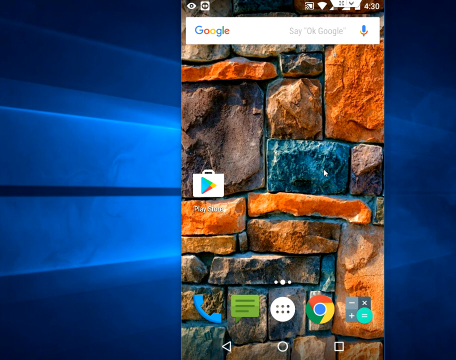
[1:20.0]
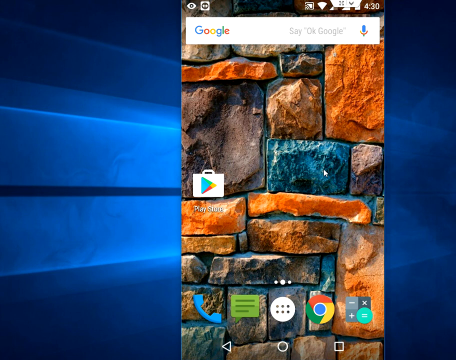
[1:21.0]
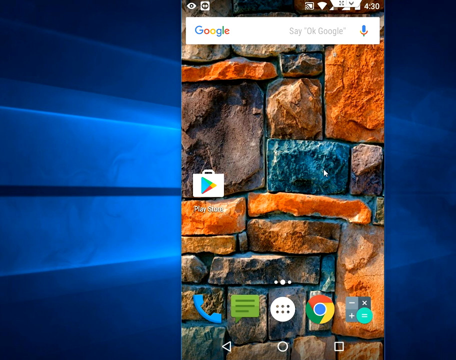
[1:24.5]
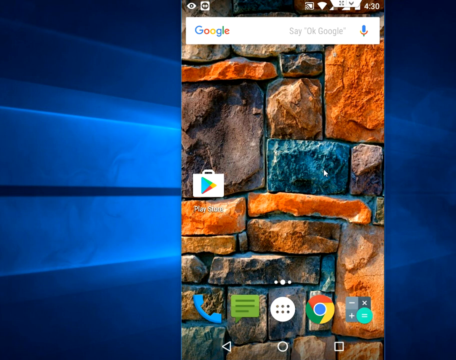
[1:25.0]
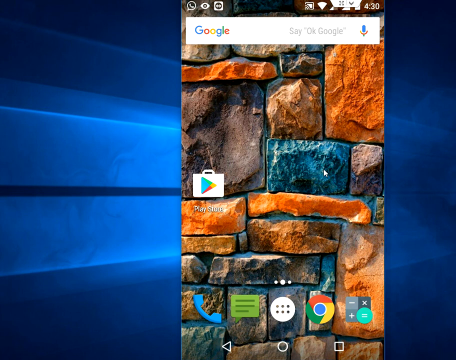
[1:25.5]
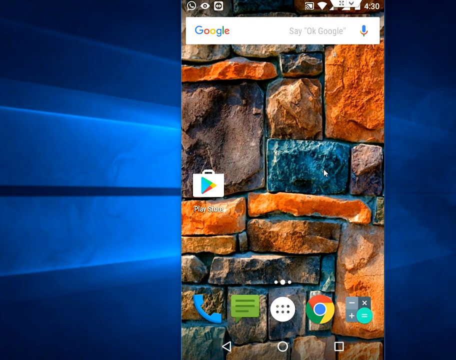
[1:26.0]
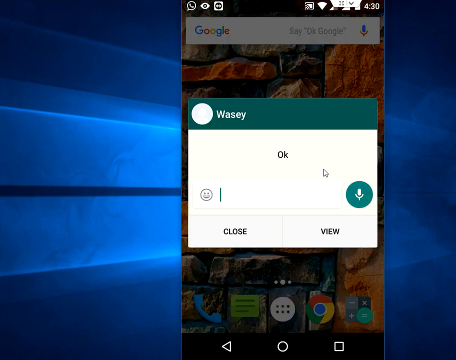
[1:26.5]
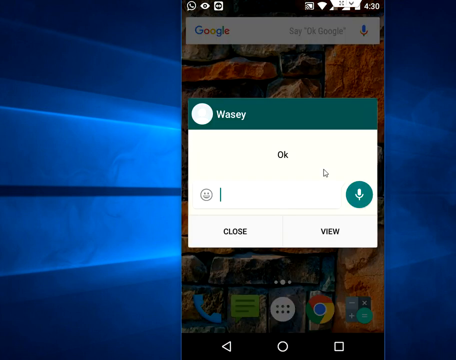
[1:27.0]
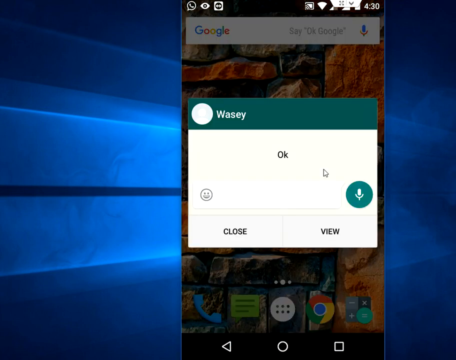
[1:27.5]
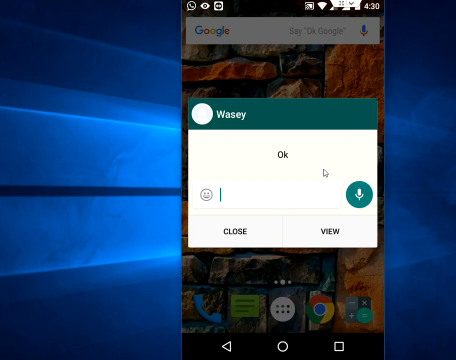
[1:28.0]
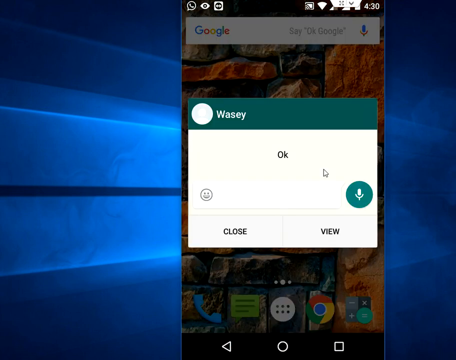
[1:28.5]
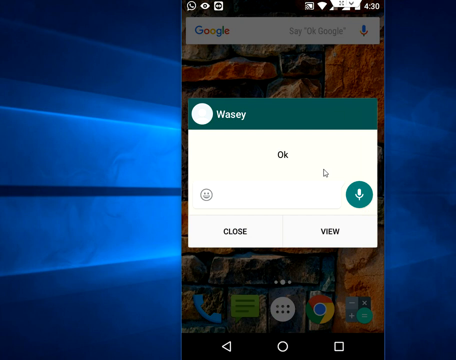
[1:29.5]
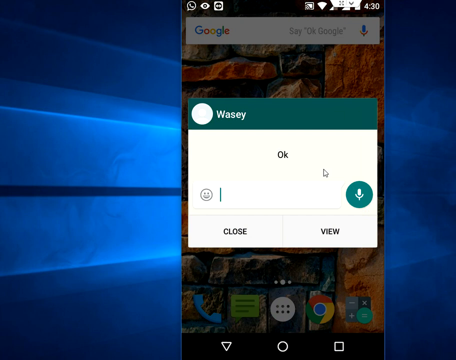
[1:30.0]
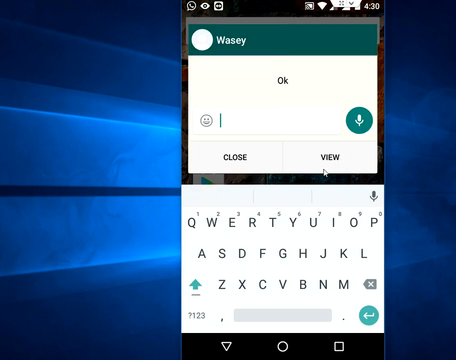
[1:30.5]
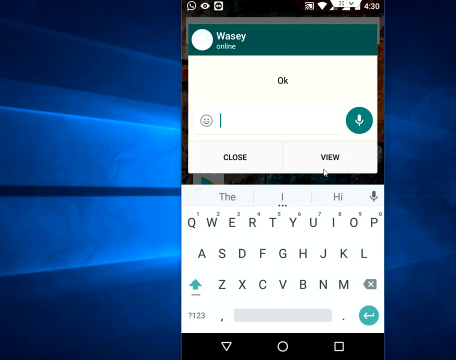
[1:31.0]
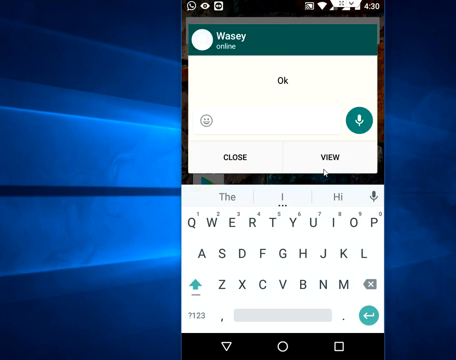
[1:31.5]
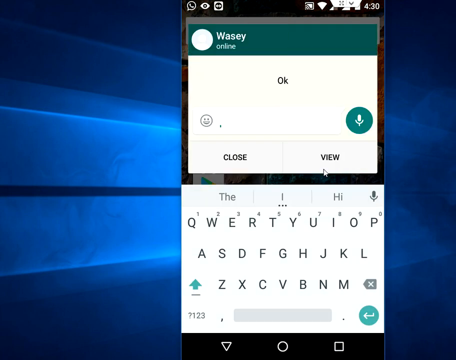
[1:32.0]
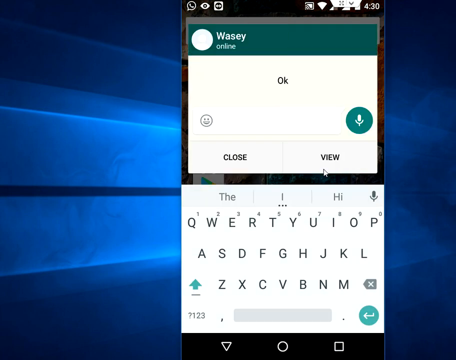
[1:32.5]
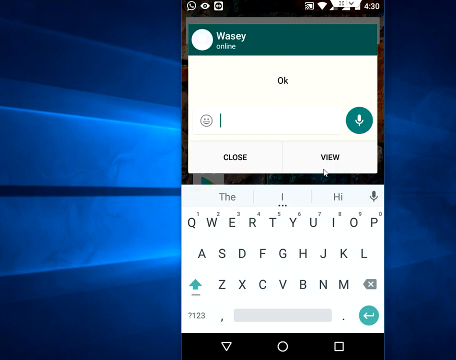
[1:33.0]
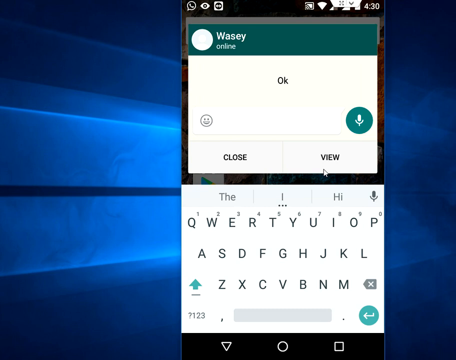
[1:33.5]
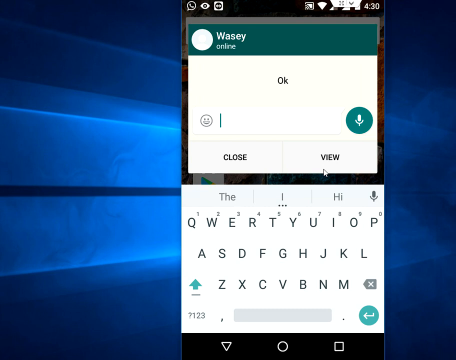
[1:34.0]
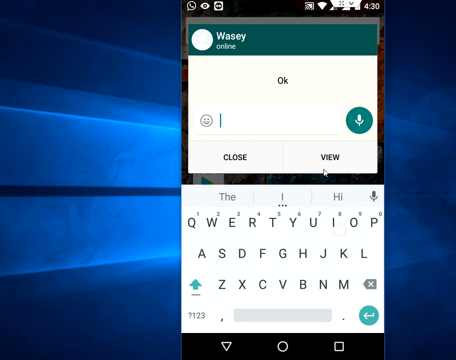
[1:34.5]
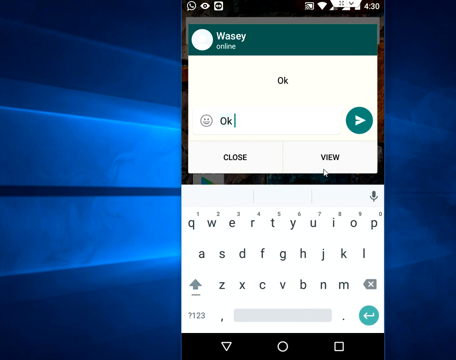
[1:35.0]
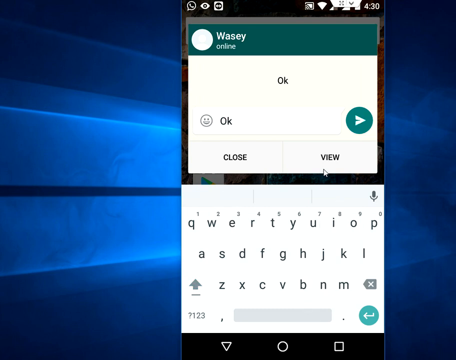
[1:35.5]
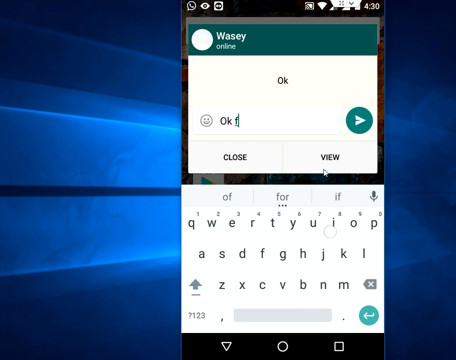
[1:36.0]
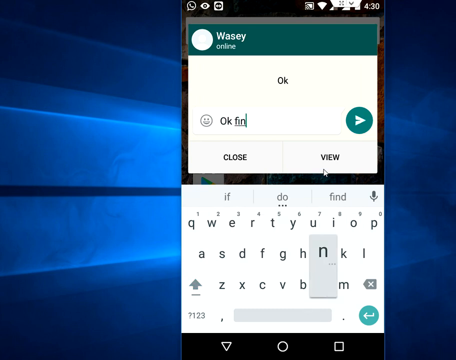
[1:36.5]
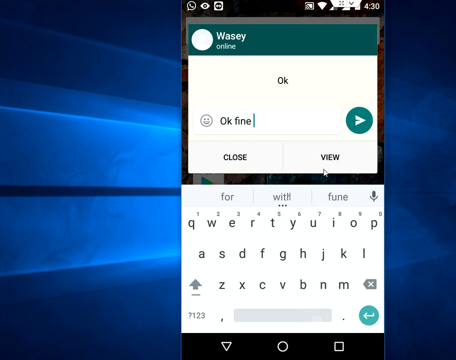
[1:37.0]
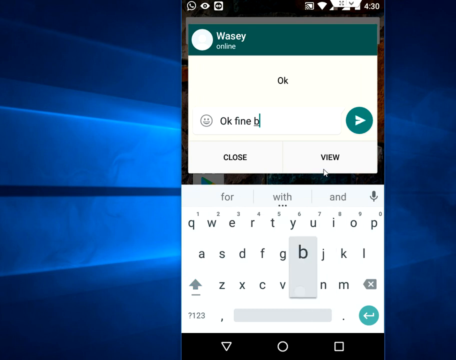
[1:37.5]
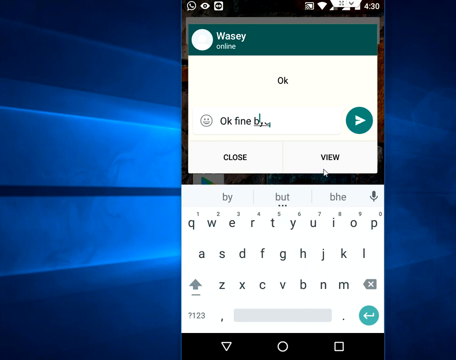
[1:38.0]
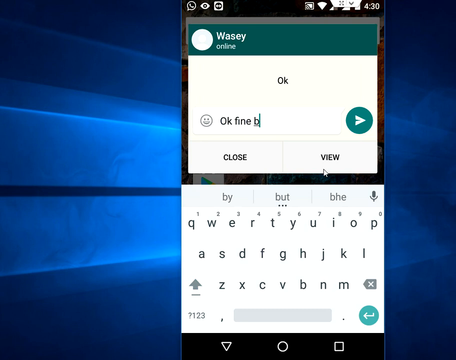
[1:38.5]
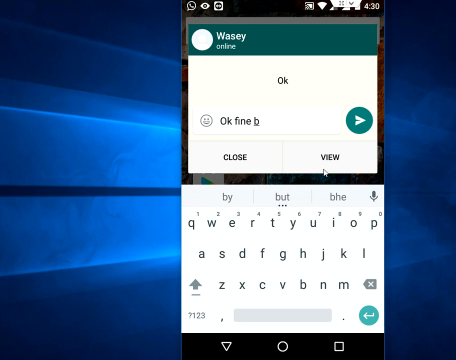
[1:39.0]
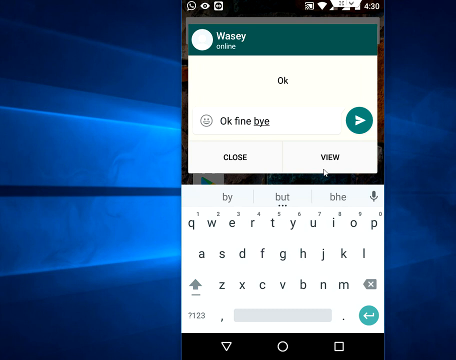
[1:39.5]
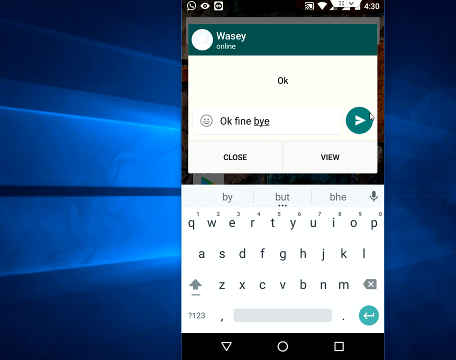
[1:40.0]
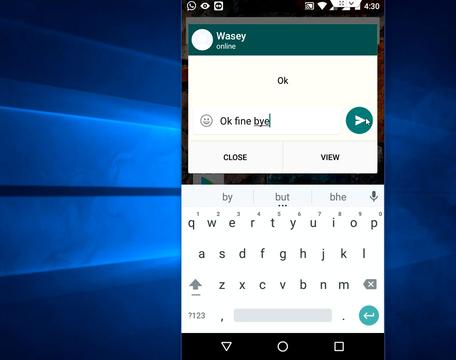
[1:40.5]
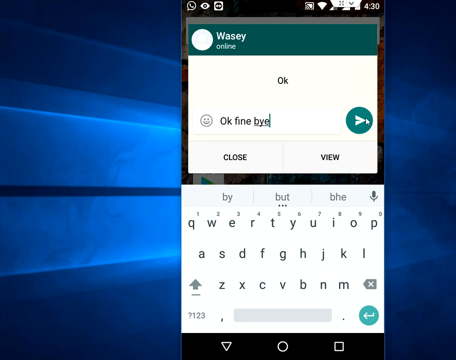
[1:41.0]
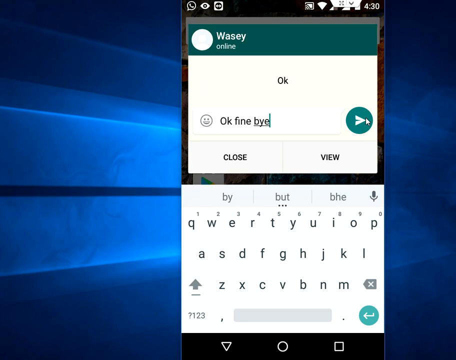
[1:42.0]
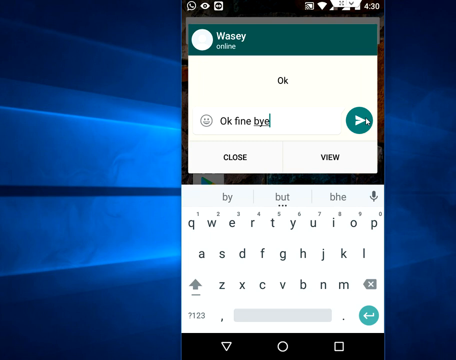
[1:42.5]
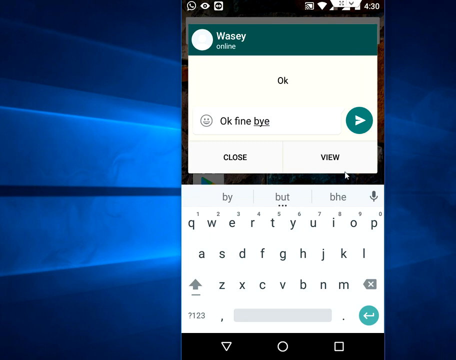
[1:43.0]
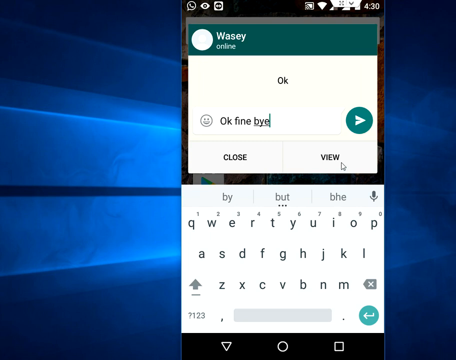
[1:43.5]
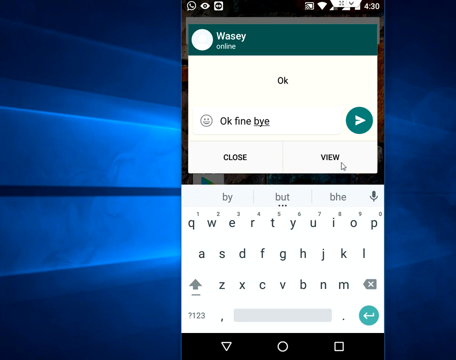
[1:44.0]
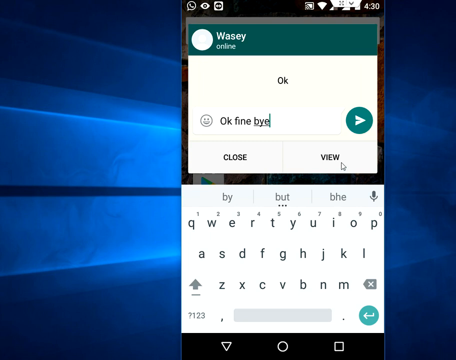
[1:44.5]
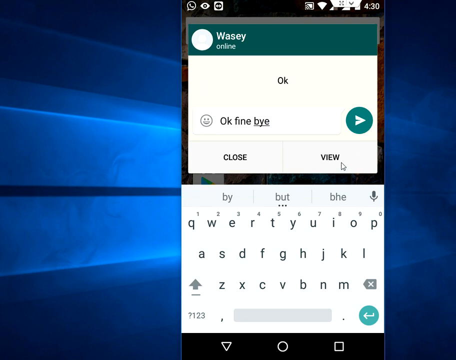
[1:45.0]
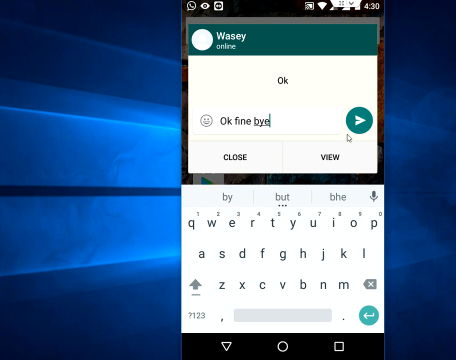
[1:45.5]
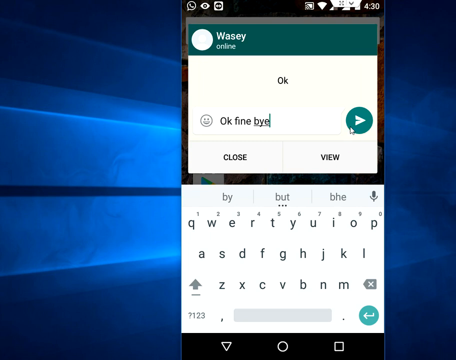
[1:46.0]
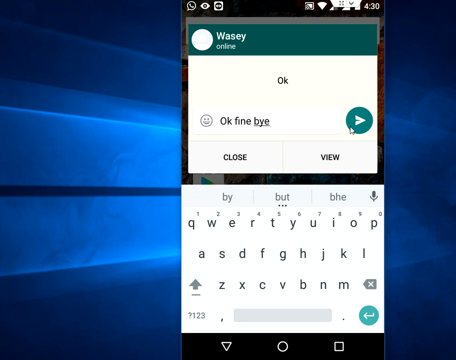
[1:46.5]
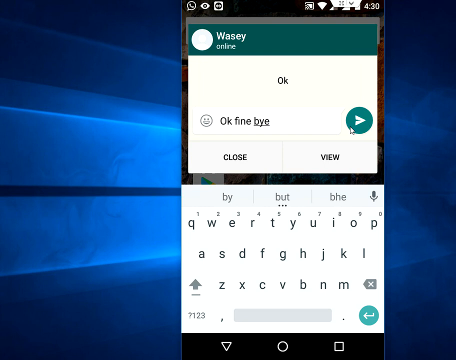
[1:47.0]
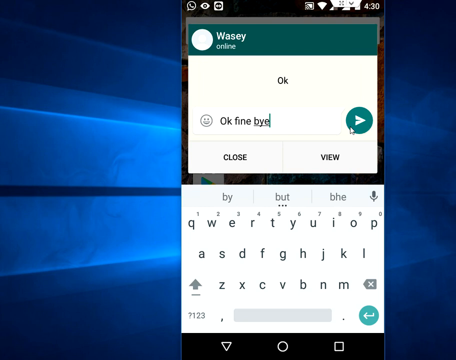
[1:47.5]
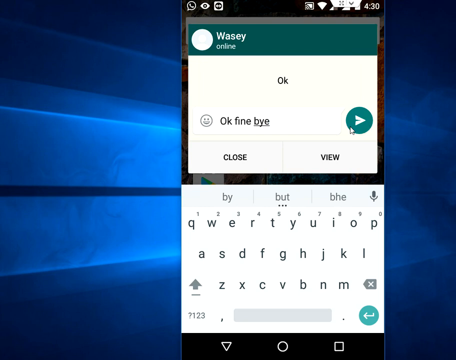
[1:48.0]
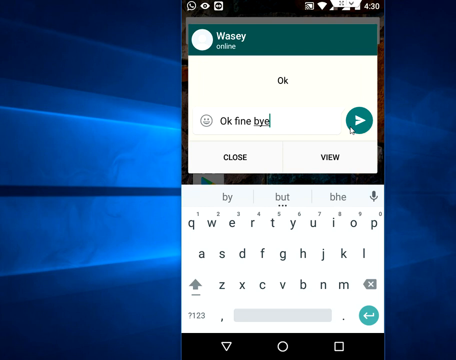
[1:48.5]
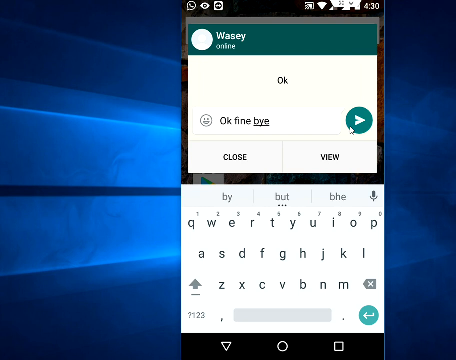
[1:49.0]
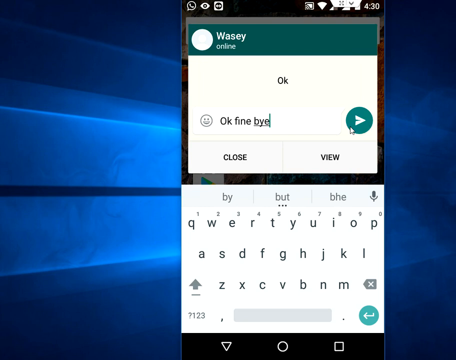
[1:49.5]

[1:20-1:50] A screenshot of someone's smartphone is set against what looks like possibly a royal blue PowerPoint slide. The screenshot is very simple, showing a colorful man-made rock wall. The Google search bar is at the top, and the only icon on the main part of the screen is the Google Play Store icon. Across the bottom are a telephone icon, a green contact icon, a white button, Google Chrome and a calculator. A computer mouse cursor appears and a window opens that looks like possibly a contact card or a messaging app. It shows the name "Wasey" at the top and then just the word "okay". There is a gray smiley face with a blinking cursor next to it, presumably where text would be typed, a circle microphone icon to the right of that, and two options below. A keyboard opens on the screen and words are typed: "okay, fine, bye". The microphone turns into an arrow key, which is then pressed. The window closes, and the screenshot of the cell phone is shown again.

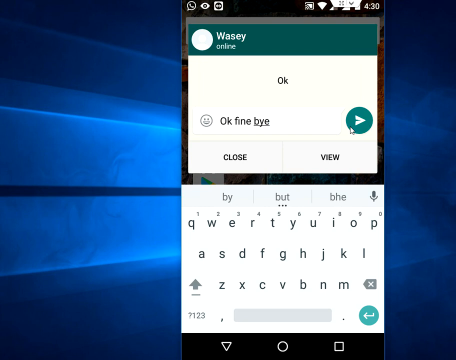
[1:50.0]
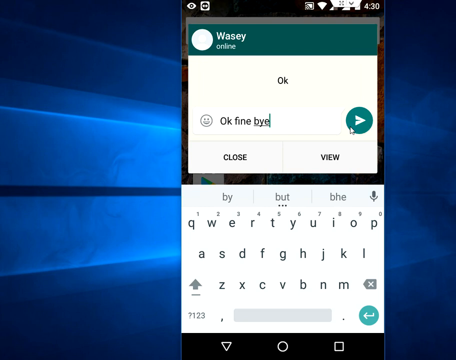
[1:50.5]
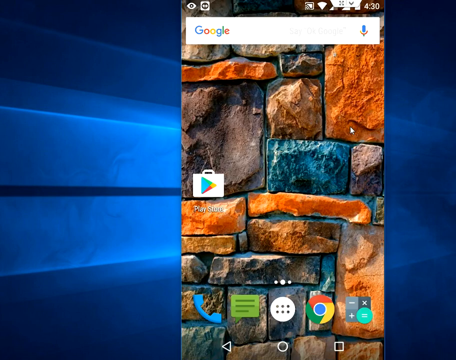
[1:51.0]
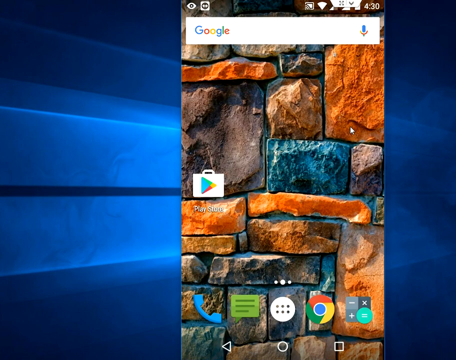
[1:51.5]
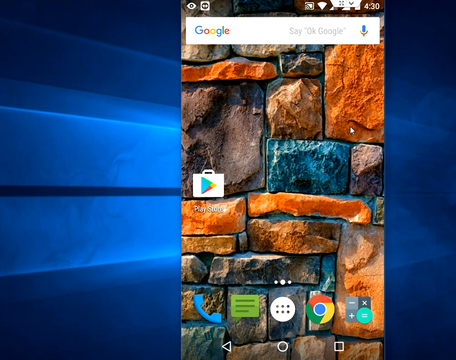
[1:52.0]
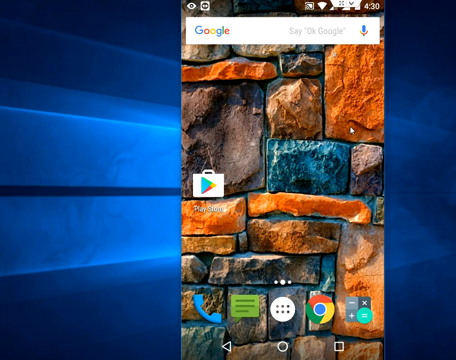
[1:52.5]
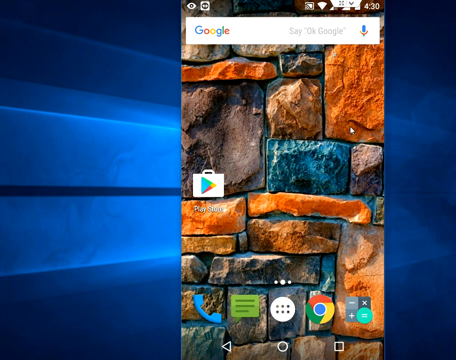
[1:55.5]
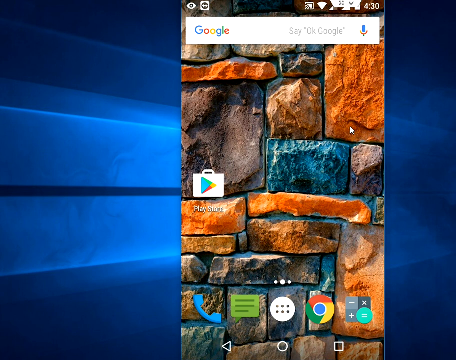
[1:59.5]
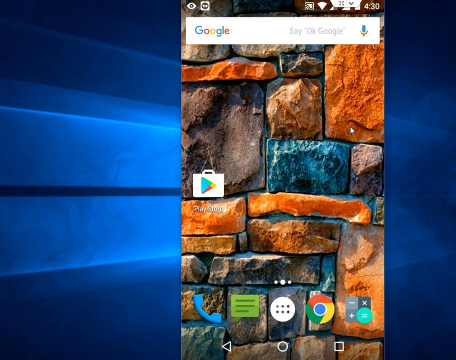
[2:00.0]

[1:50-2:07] A window closes very quickly, and then a screenshot of somebody's cell phone is shown on a royal blue background, possibly a PowerPoint presentation, with a man-made rock wall as the wallpaper. At the top is the time 4:30 along with some other tiny white icons. Under that is the Google search bar, with "Google" on the left, "say, okay, Google" in faint gray lettering, and a microphone symbol. In the middle there is only one icon, the Google Play Store icon. Five icons run across the bottom, from left to right: a blue telephone, a green contact card, a white button with six little dots on it, the Google browser icon, and a square calculator icon with a little circle where the equal sign is.